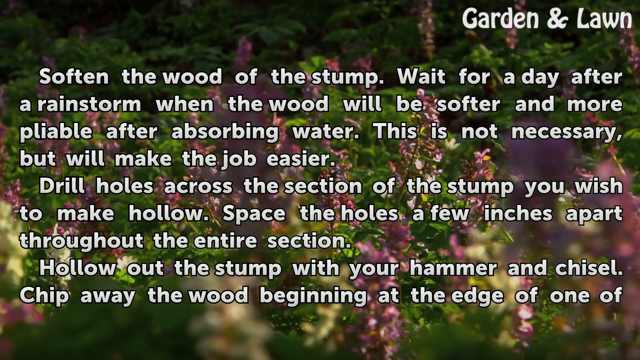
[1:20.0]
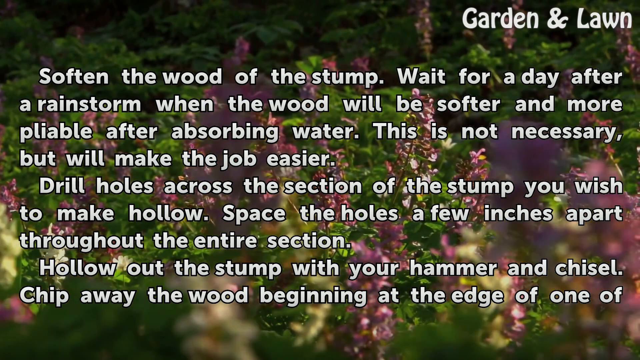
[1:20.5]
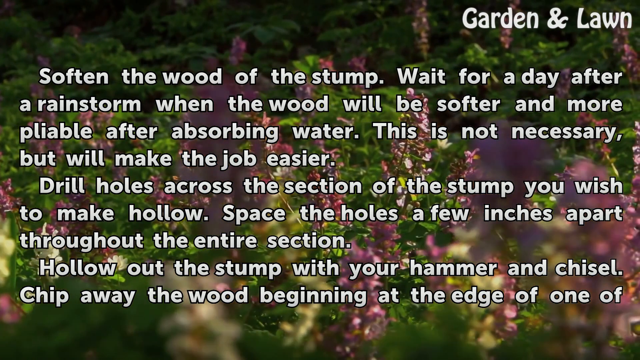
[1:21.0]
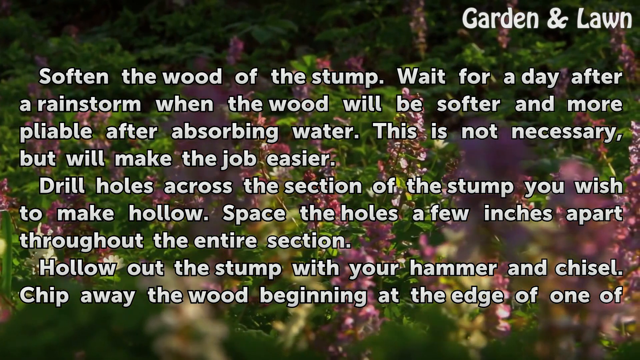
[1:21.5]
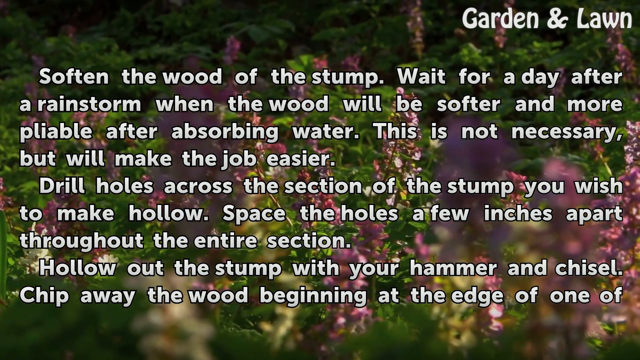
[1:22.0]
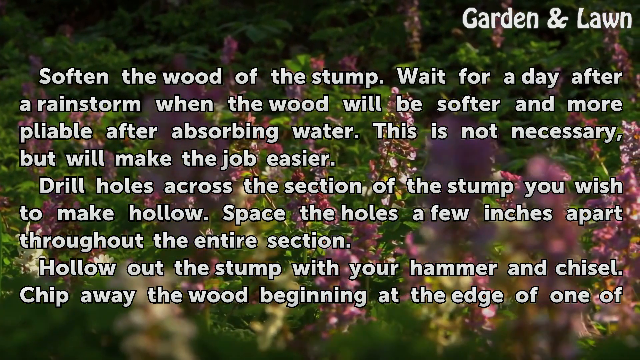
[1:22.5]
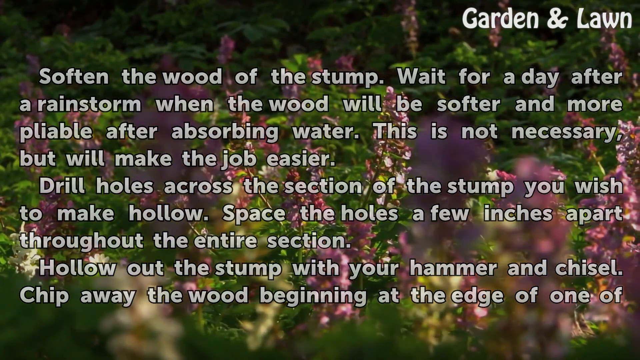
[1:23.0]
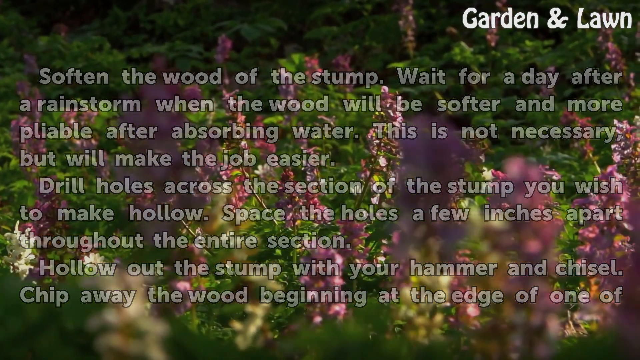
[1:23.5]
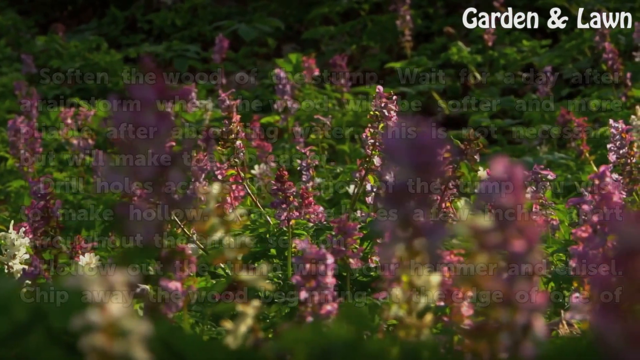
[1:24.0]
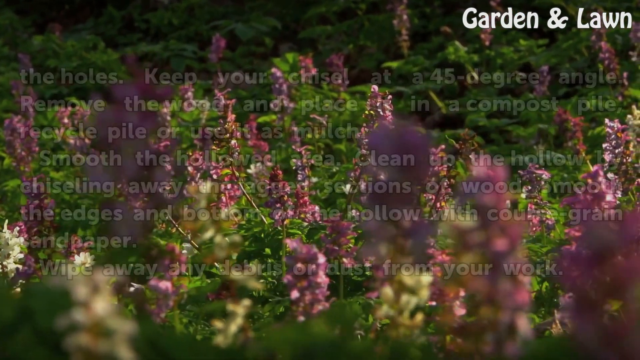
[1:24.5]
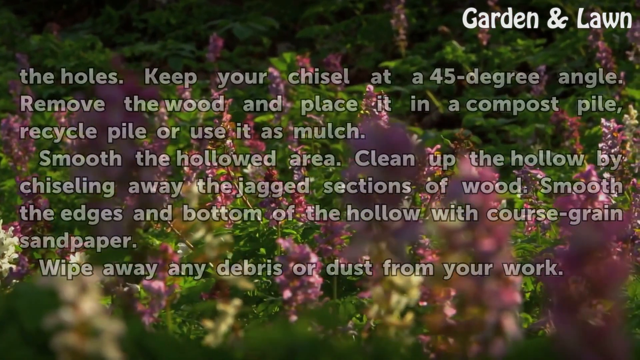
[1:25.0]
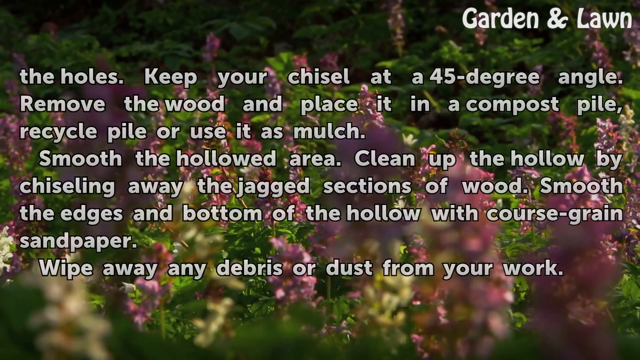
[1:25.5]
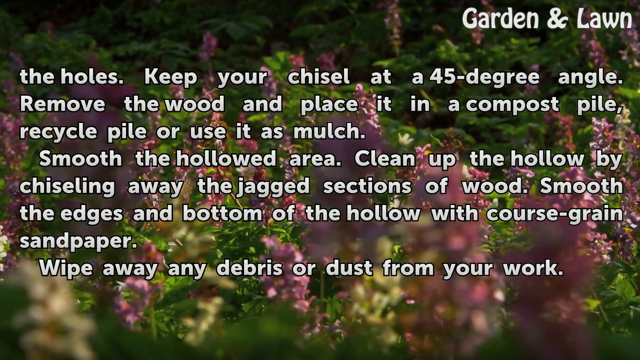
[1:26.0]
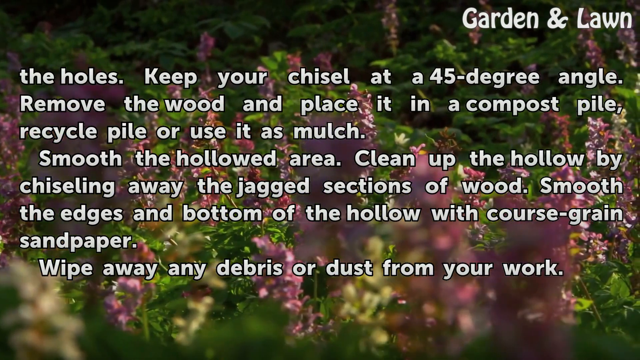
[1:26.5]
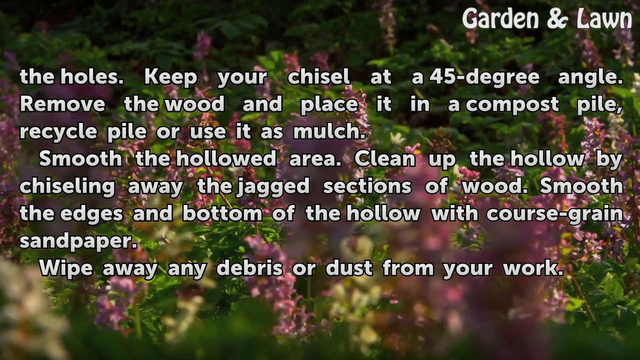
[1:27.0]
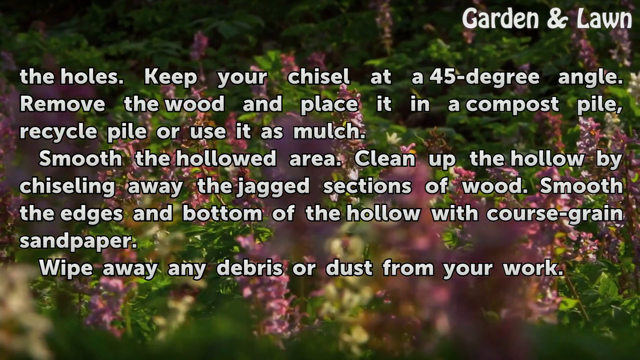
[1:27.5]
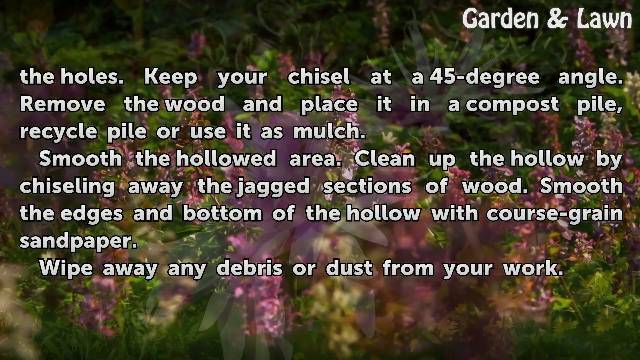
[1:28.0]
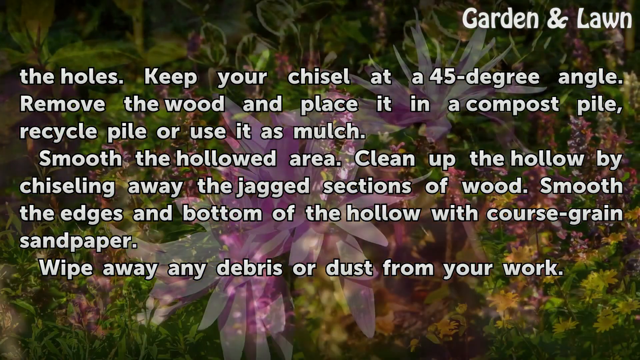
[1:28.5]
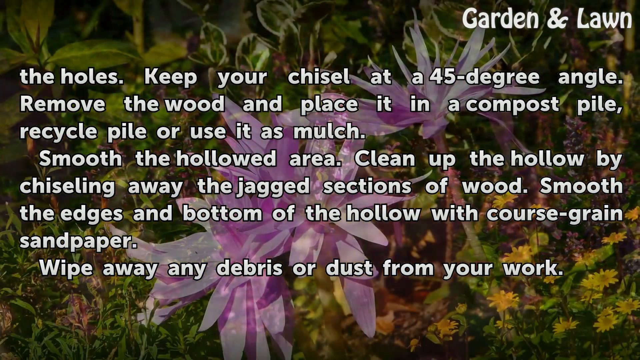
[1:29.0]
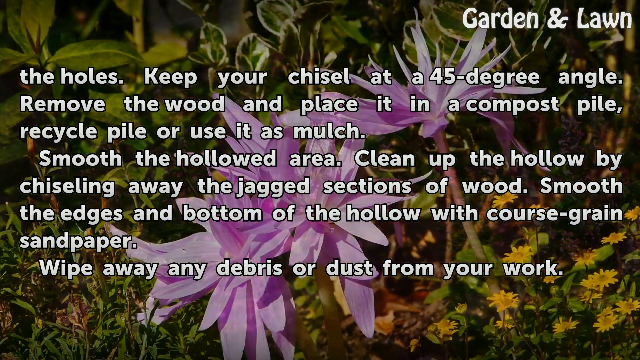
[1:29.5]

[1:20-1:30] The on-screen message describes softening the wood of the stump by waiting a couple of days after a rainstorm so the wood soaks up water, or watering it, notes that this is not necessary, and describes drilling holes around the section of the stump to be removed and then chiseling from the outside in with a hammer and chisel to hollow out the stump. Meanwhile, images of more flowers slowly roll by. The text then says to keep the chisel at a 45 degree angle, remove the wood and place it in a compost pile, smooth out the hollowed area with sandpaper, and wipe away the debris and dust from the work area.